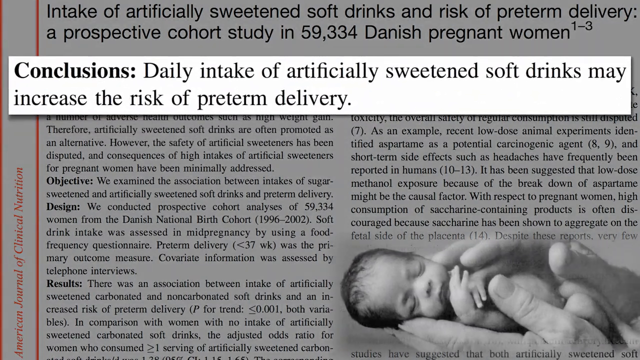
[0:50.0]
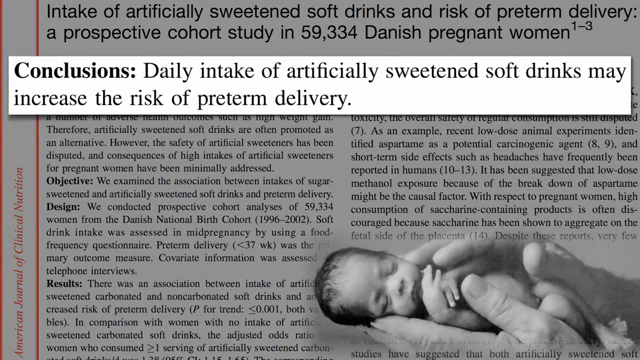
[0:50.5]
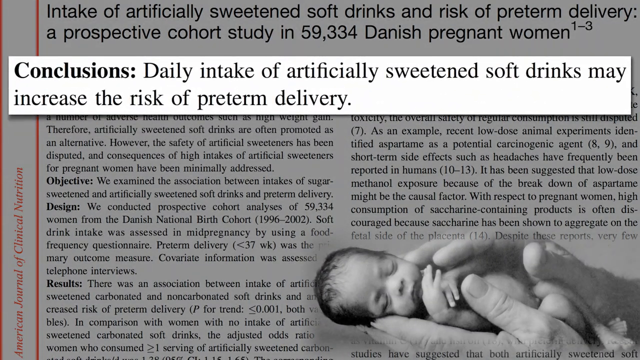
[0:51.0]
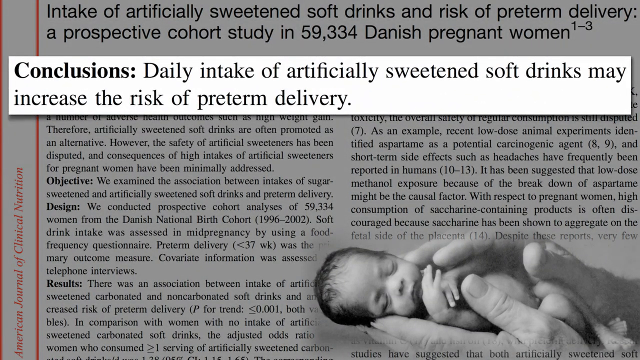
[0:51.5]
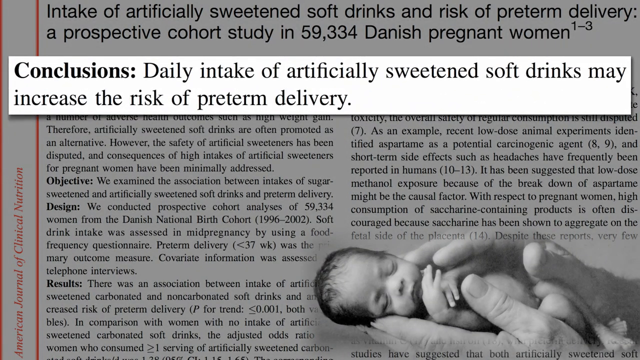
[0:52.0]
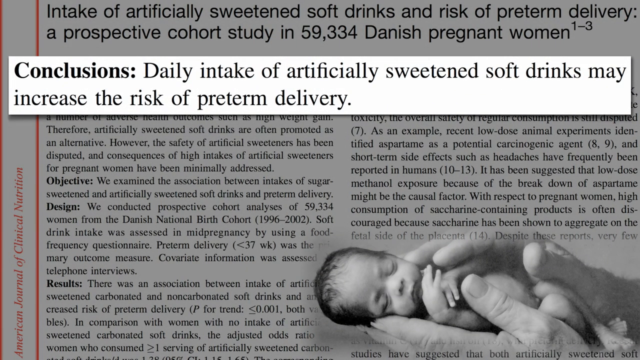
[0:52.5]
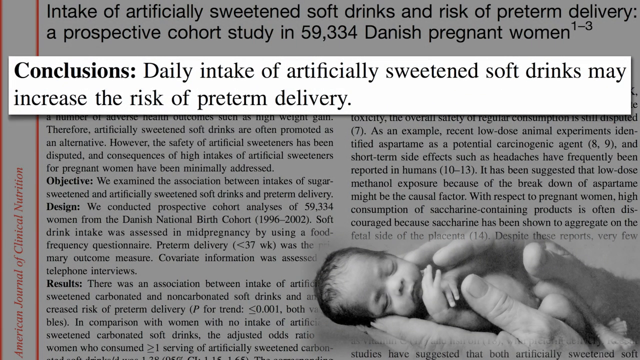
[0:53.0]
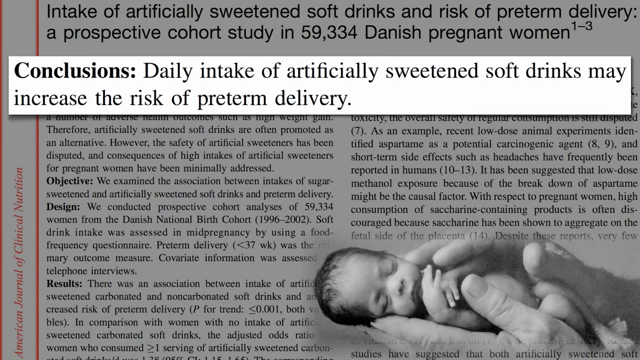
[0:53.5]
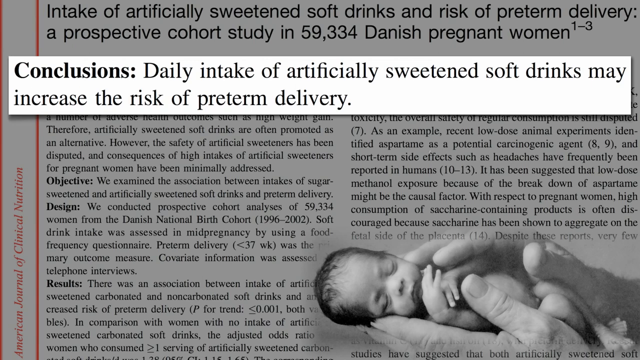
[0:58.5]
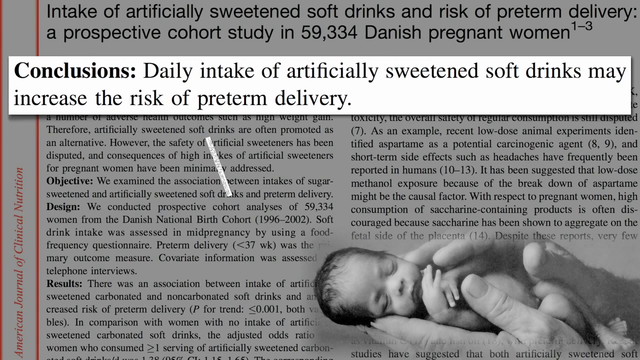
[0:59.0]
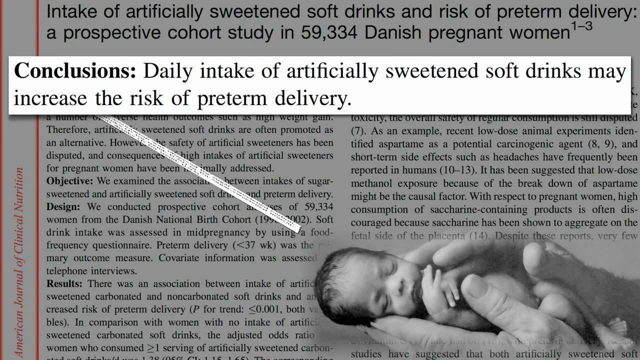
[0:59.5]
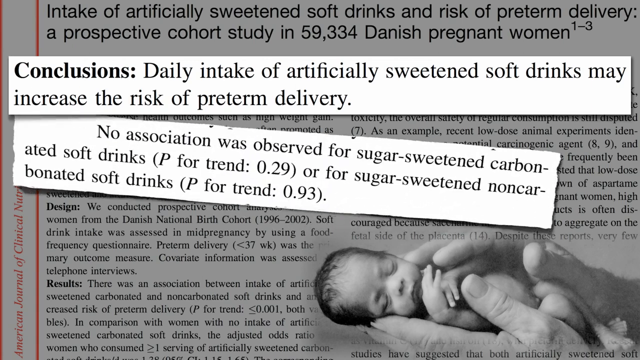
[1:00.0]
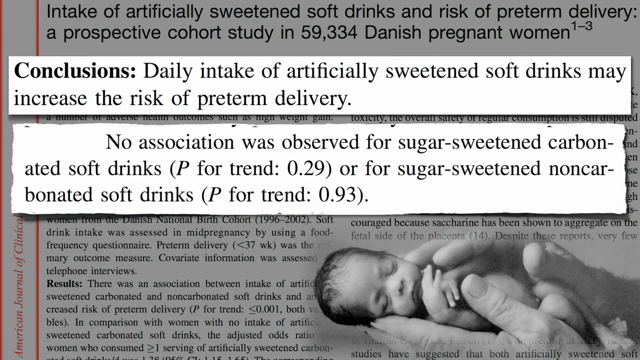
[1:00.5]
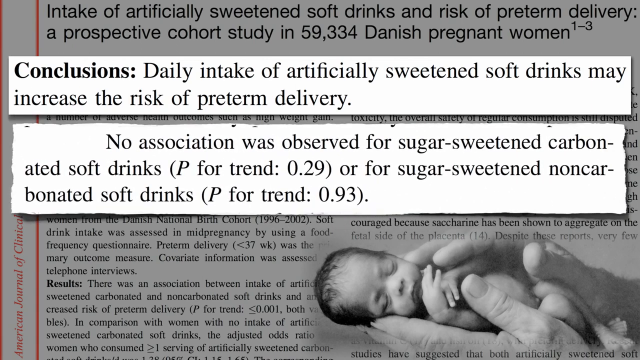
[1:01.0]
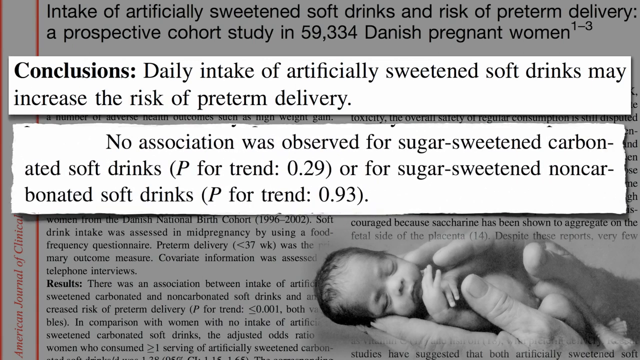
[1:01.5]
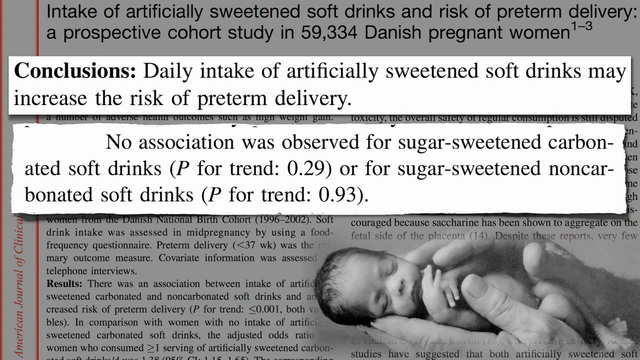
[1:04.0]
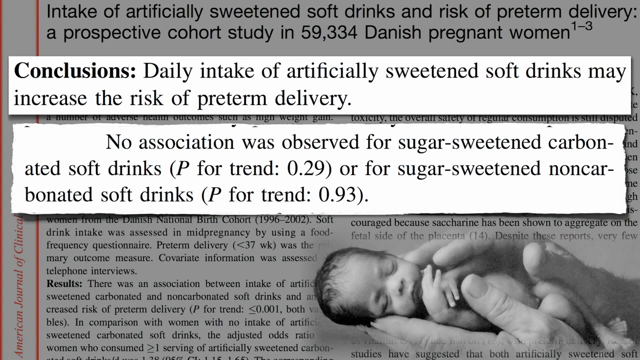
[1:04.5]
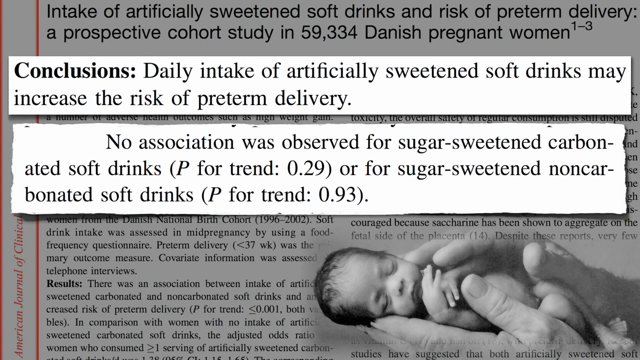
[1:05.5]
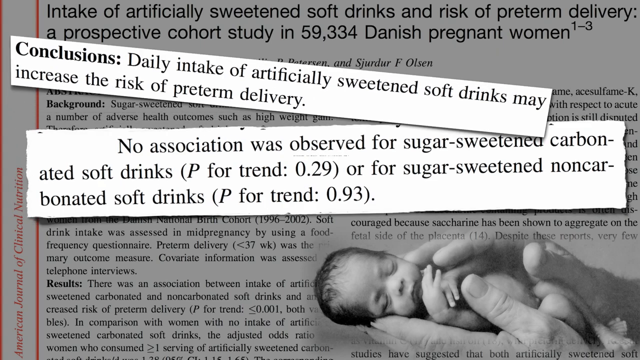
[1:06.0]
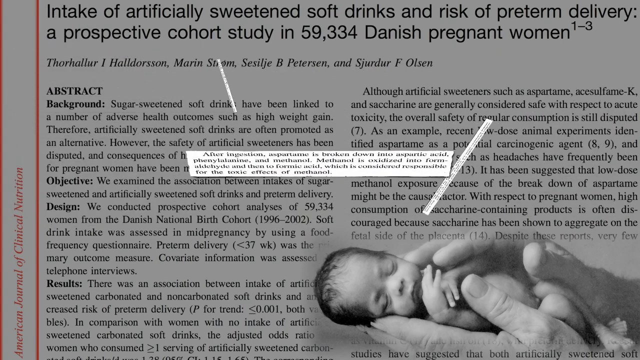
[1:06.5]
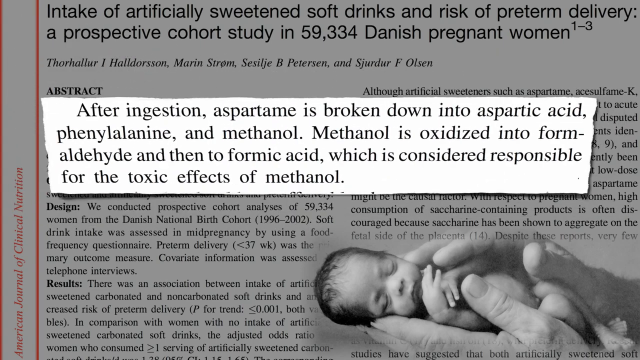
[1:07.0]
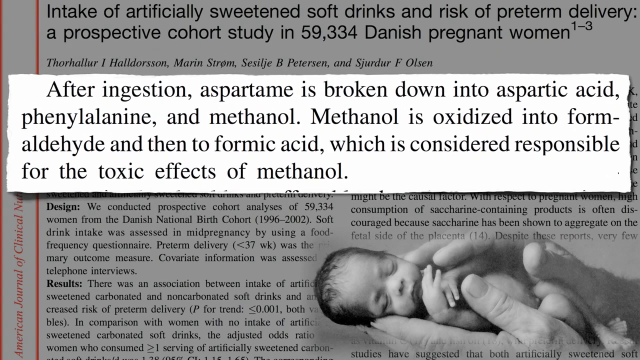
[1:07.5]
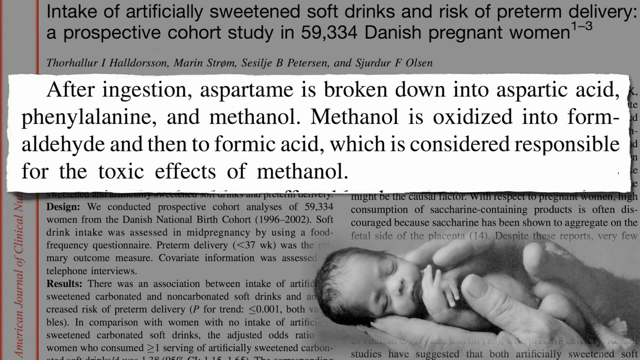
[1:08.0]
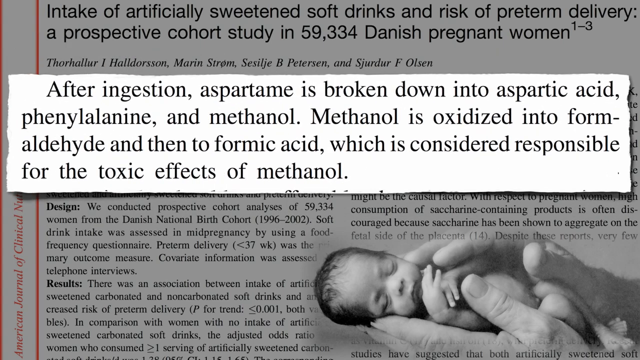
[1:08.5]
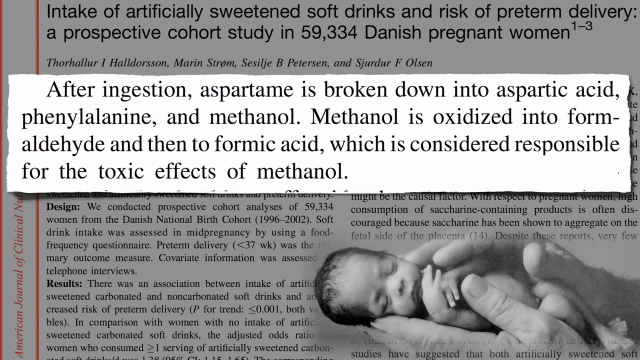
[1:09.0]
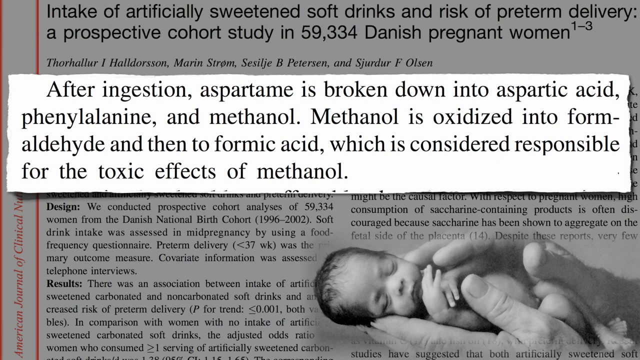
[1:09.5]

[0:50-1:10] The same image of the study remains, with the conclusions about daily intake of artificially sweetened soft drinks possibly increasing the risk of preterm delivery in the same larger font, and the small baby being held in the corner. Below the conclusions, in the same font and size, information appears stating that there is no association with risk of preterm delivery for regular sugar-sweetened soft drinks or sugar-sweetened non-carbonated soft drinks like juice, highlighting that the risk is specific to artificially sweetened soft drinks.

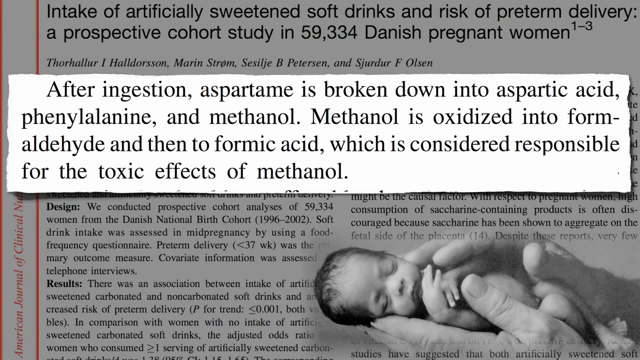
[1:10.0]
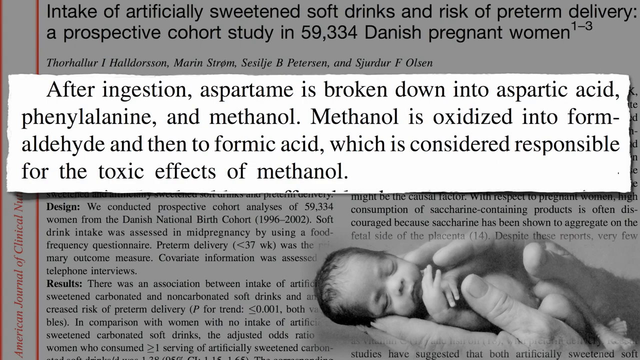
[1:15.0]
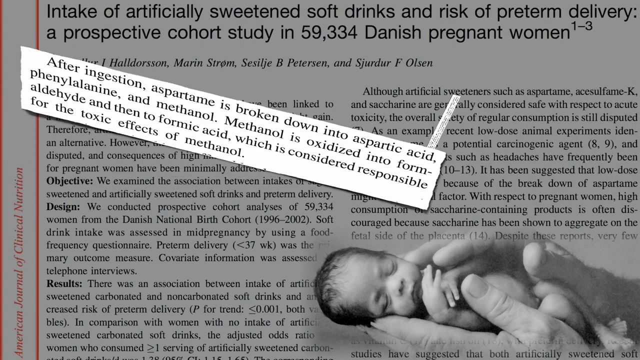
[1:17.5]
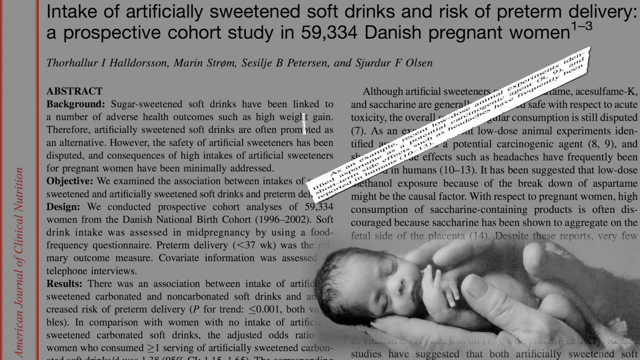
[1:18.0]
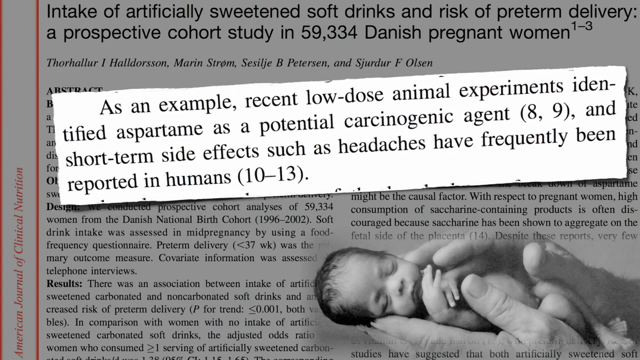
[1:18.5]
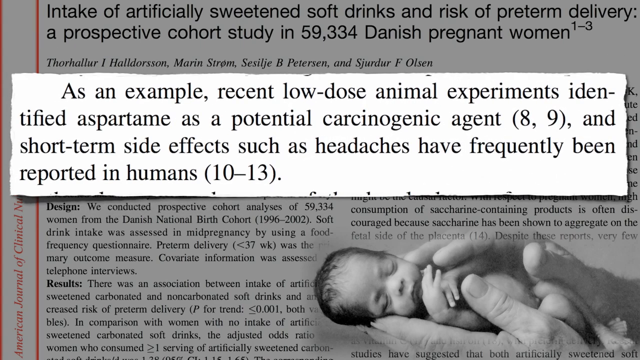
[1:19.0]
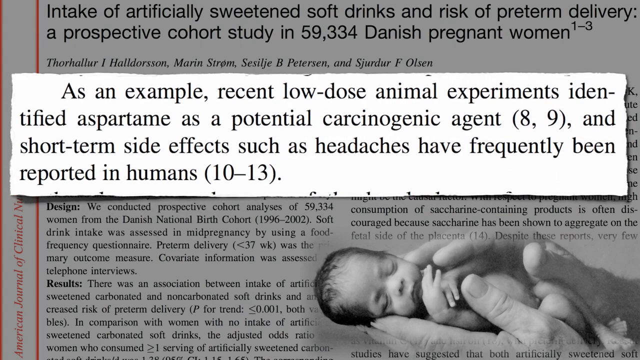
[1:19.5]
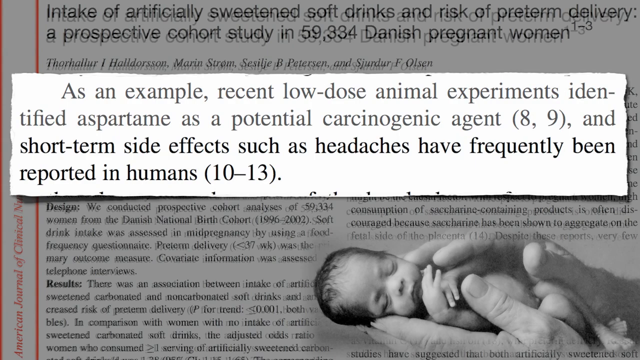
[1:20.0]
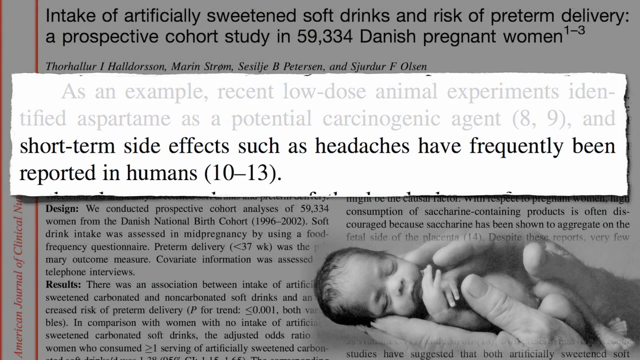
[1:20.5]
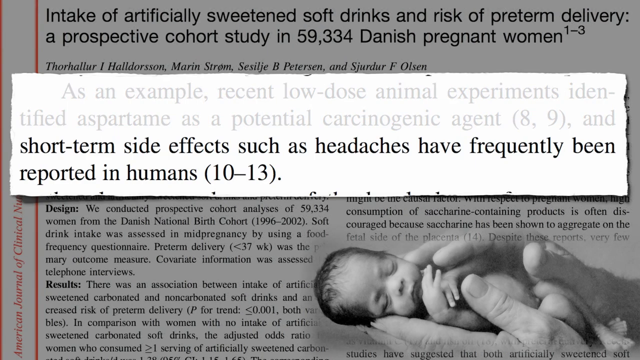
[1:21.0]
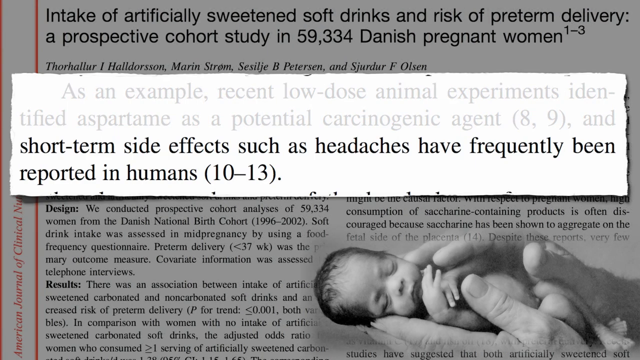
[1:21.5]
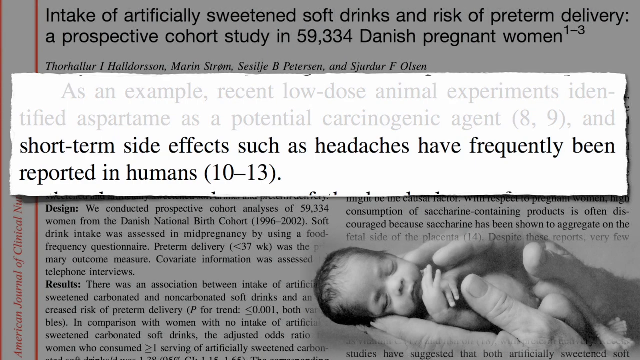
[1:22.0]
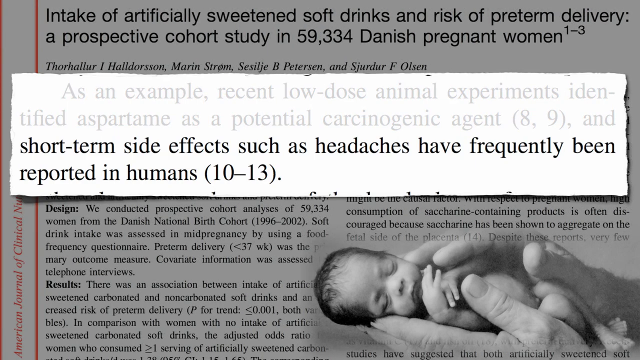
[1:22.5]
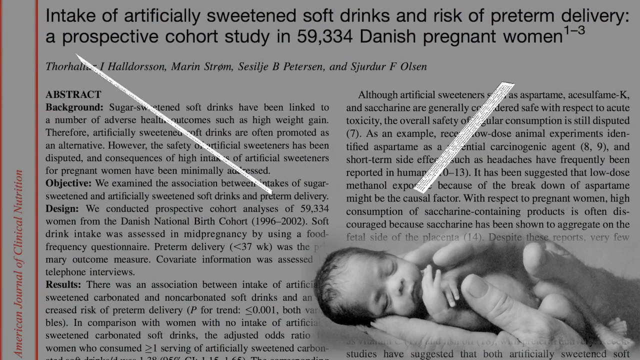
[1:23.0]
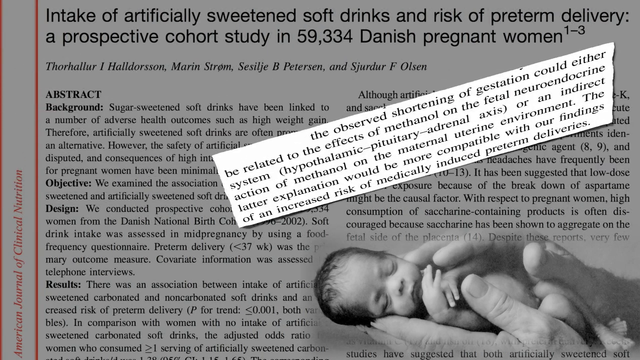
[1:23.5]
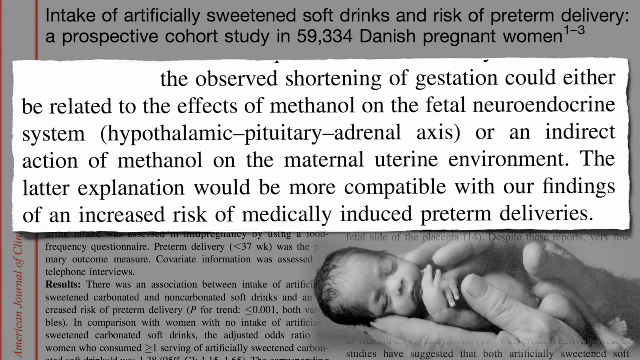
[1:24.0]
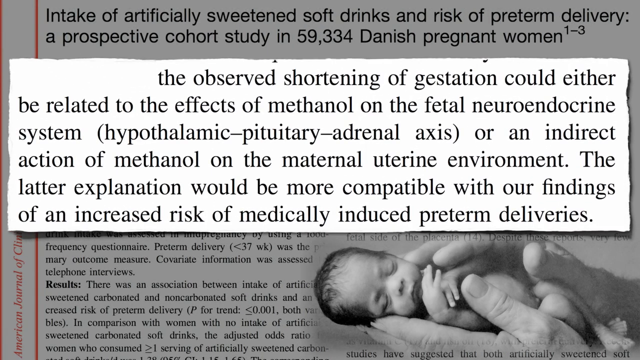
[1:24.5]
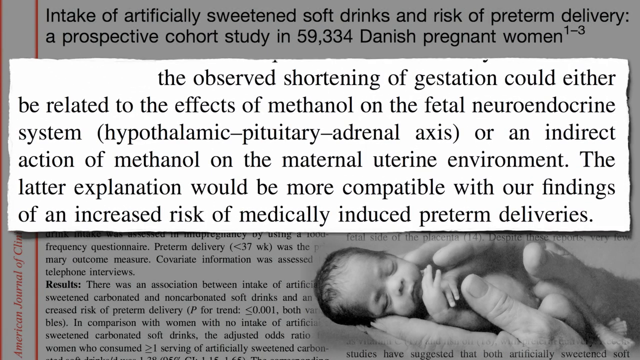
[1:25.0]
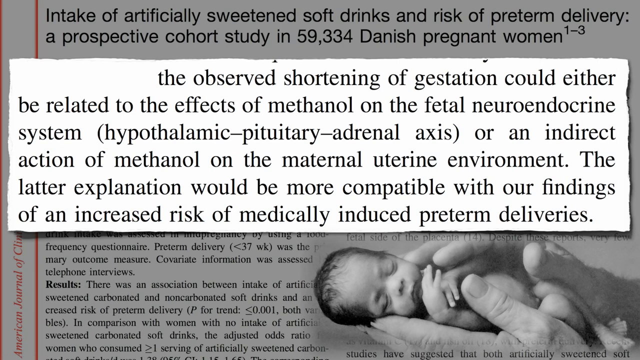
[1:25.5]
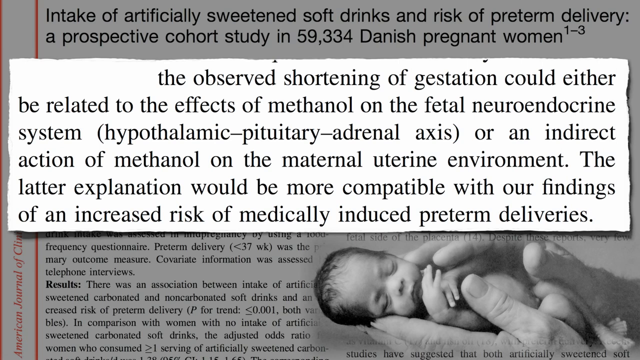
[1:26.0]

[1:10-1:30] The same study continues, now with text in larger font on screen about why aspartame is thought to cause a risk of preterm delivery: aspartame is broken down into aspartic acid, phenolphthalein and methanol, and methanol oxidizes to formaldehyde and finally formic acid, thought to cause the toxic effects of methanol to the baby. This stays on screen for a while, then switches to a different cutout from the study stating that recent low dose animal experiments identified aspartame as a potential carcinogenic agent and that short-term side effects such as headaches have been reported in humans. Finally, another piece is highlighted stating that the shorter gestation time could be related to effects of methanol on the fetus or indirect action of methanol on the maternal uterine environment. Each is a section of the study cut out in the same larger font, with the original study and the baby behind it.